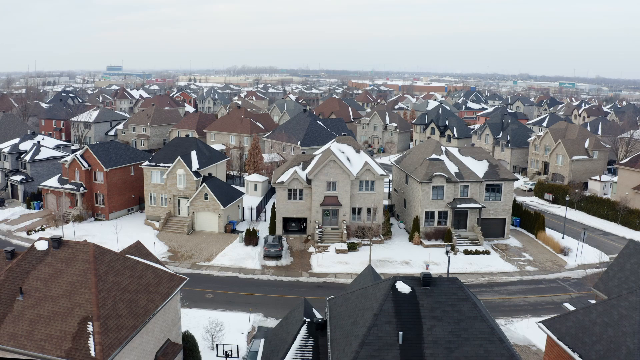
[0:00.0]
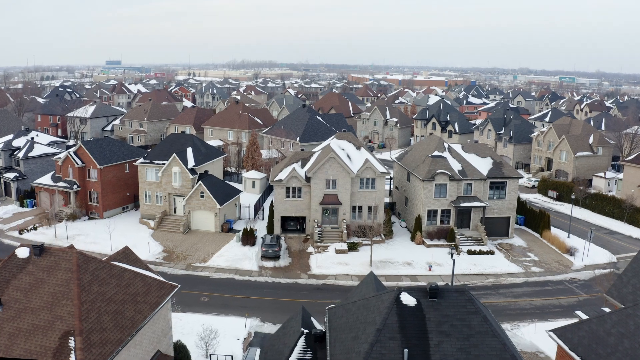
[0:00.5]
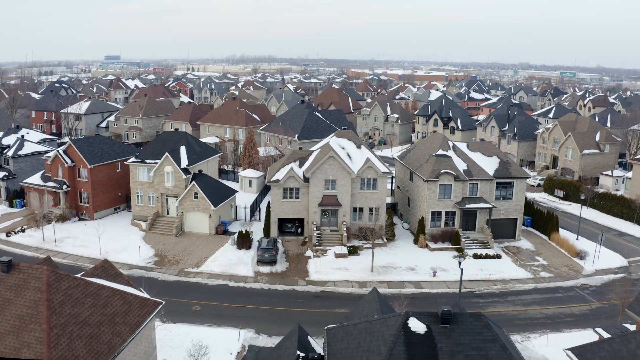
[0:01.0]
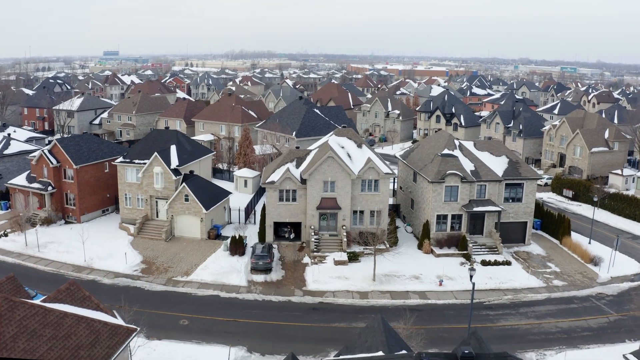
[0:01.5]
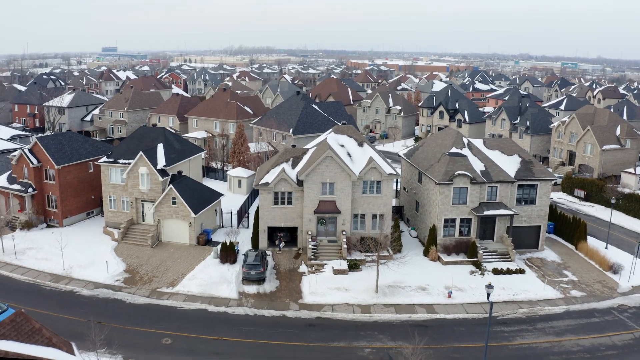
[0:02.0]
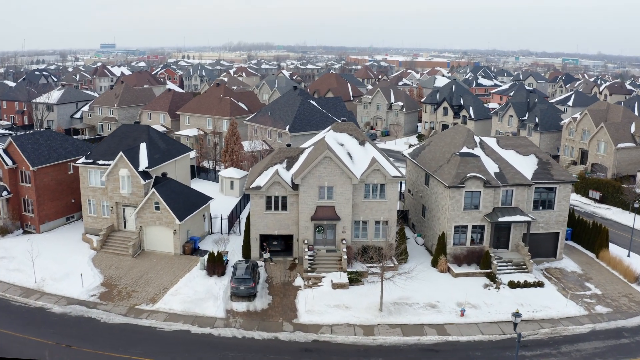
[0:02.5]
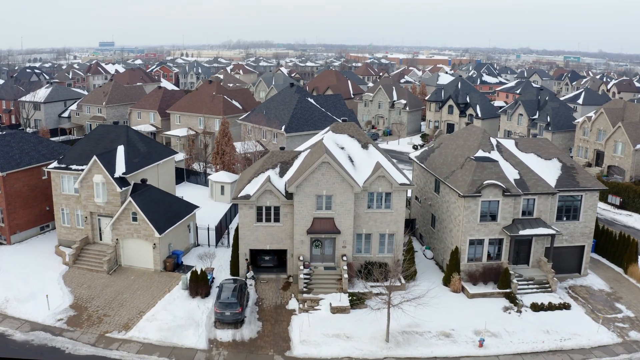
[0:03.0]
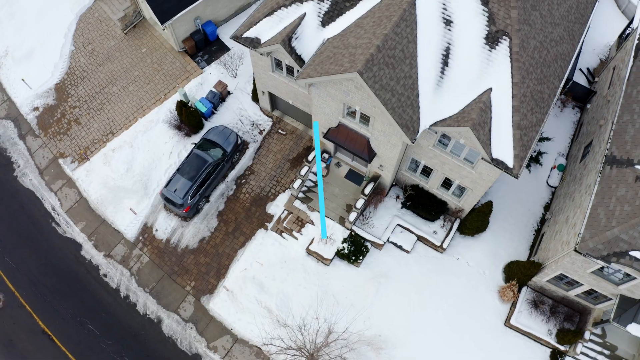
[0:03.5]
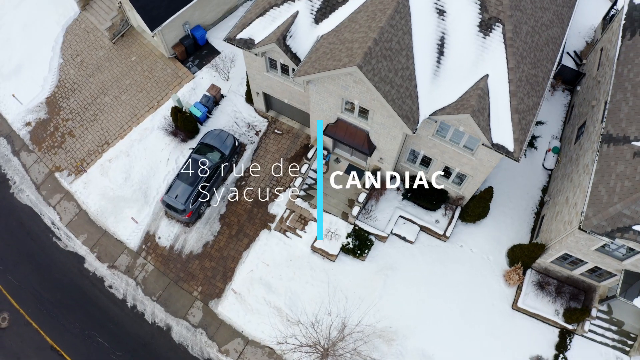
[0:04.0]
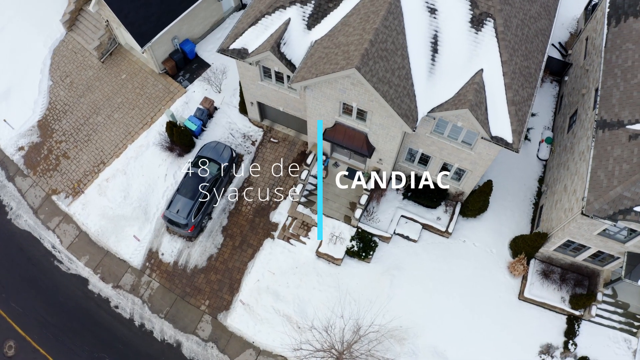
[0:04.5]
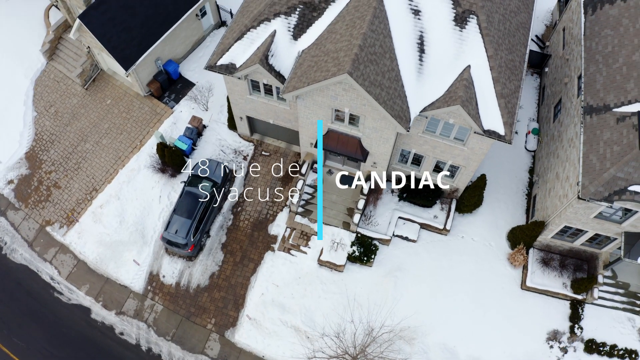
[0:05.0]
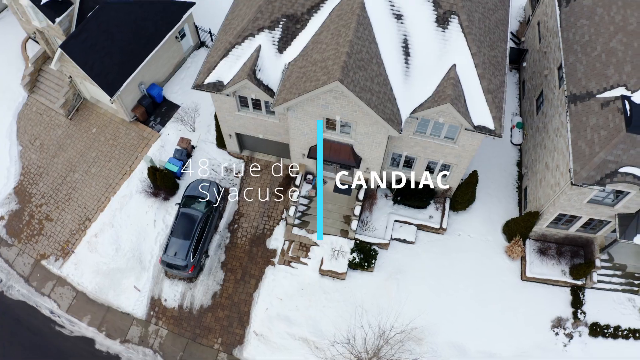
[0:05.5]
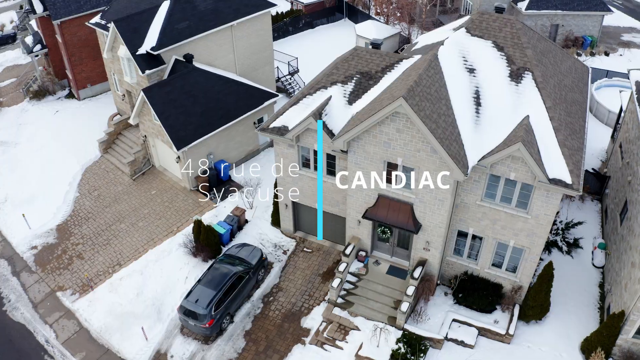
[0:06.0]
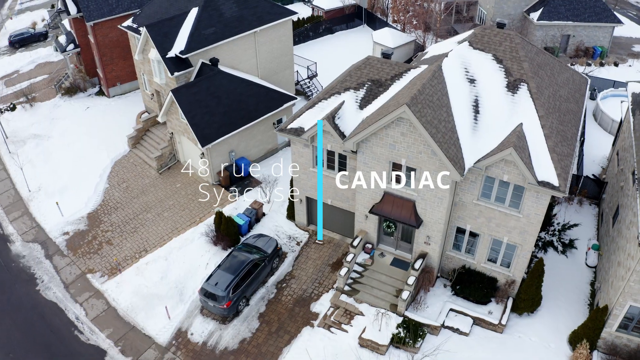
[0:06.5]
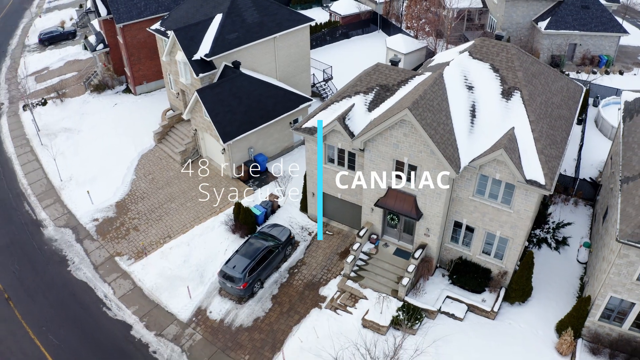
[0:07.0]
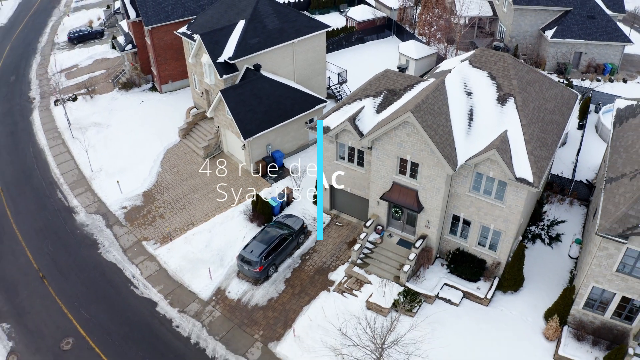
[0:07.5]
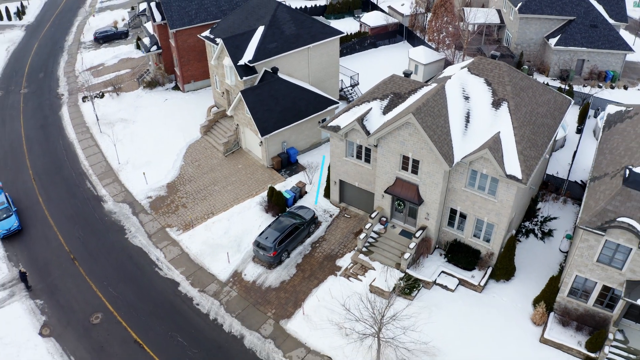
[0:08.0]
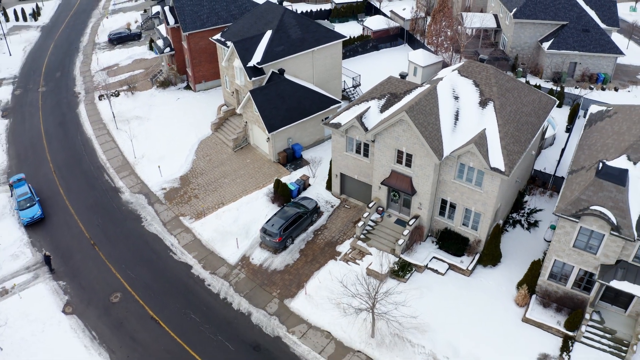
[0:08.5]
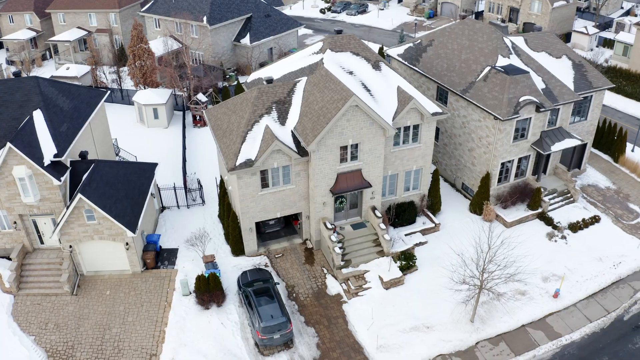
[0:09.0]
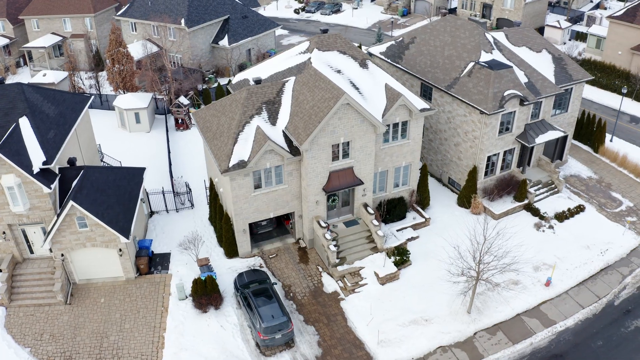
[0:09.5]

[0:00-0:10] Drone-style point-of-view footage shows a neighborhood with many houses on close-together properties. A road runs horizontally across the bottom of the screen, and the front faces of four houses are visible. Many of the houses are the same gray color, but some have different colored rooftops: a couple are brown, many are dark gray, and some are a regular shade of gray. The next shot points downward at a house with a car; on the left it appears to be wintertime, as there is a lot of snow. Text reads "48 Rue de Syracuse, Candiac" with a light blue line in the middle. More drone footage follows of two houses, and the camera rotates slightly to the right.